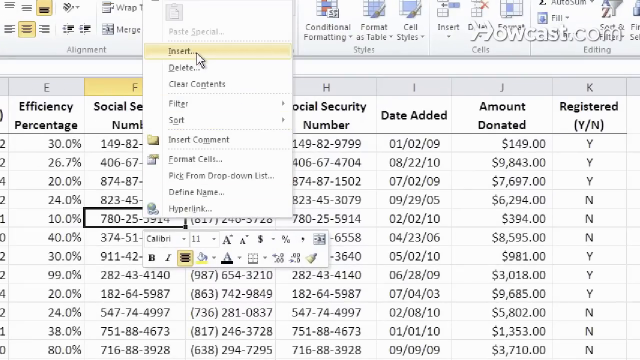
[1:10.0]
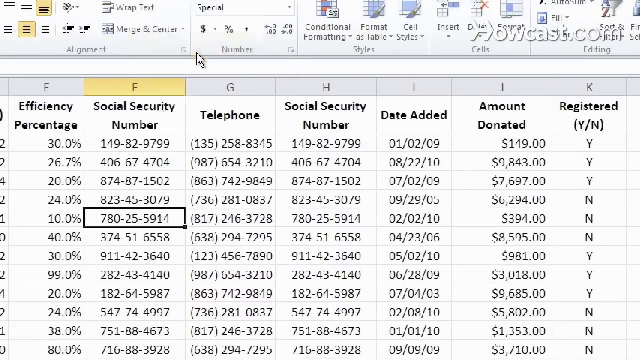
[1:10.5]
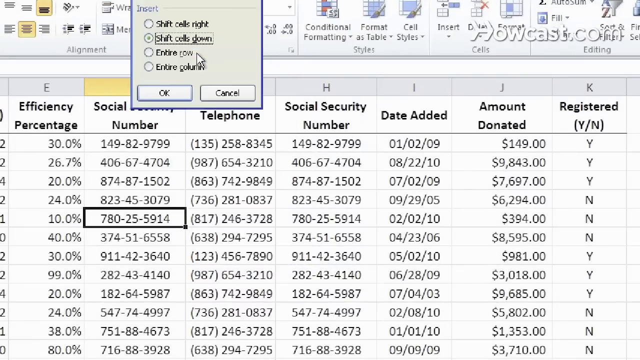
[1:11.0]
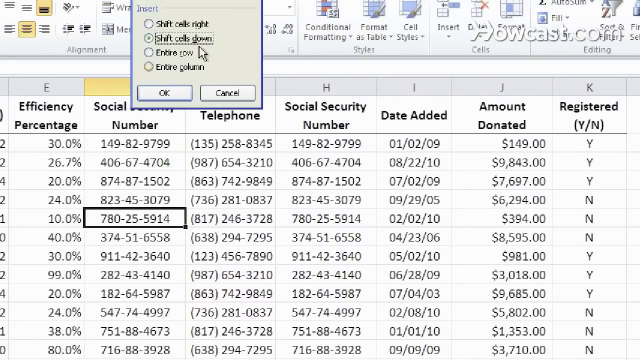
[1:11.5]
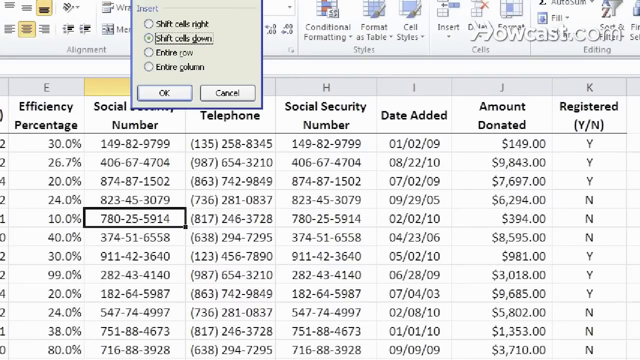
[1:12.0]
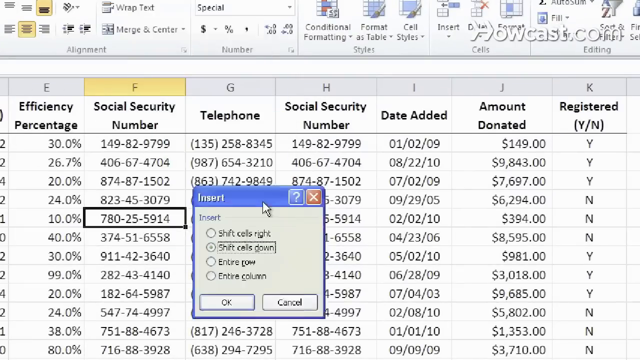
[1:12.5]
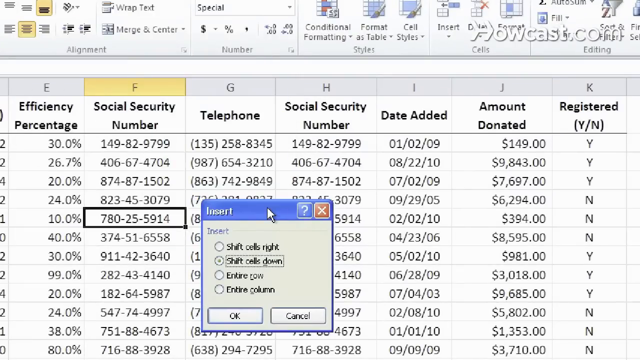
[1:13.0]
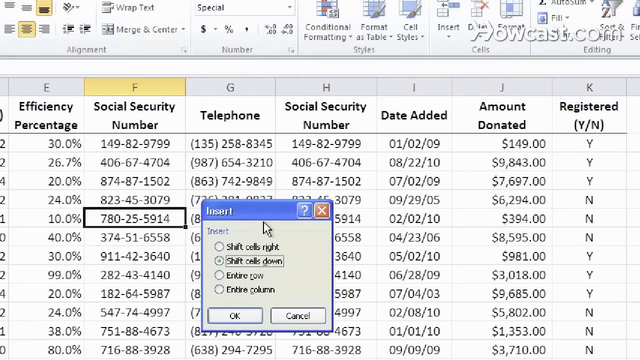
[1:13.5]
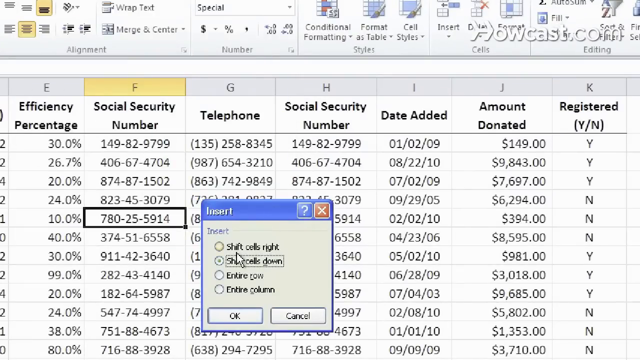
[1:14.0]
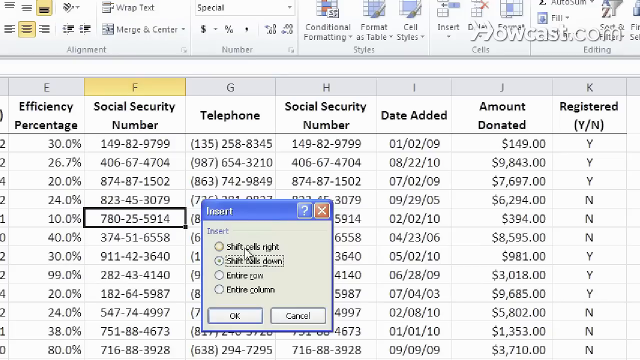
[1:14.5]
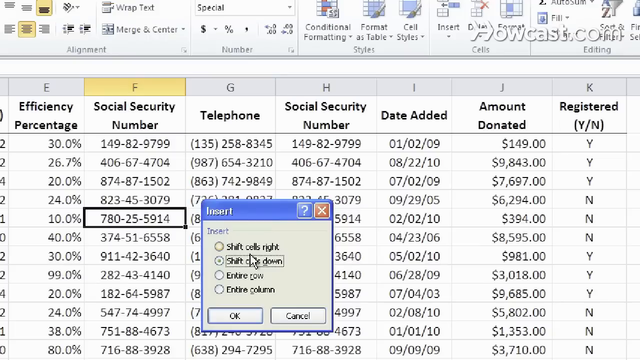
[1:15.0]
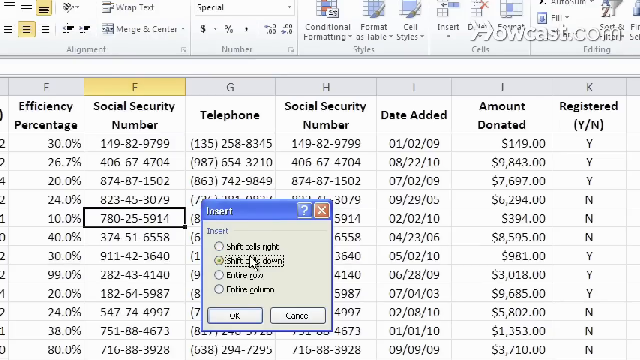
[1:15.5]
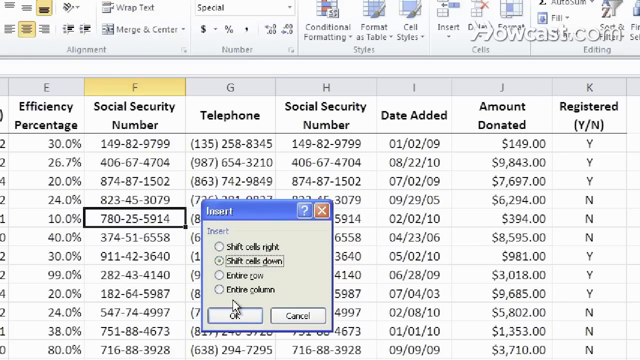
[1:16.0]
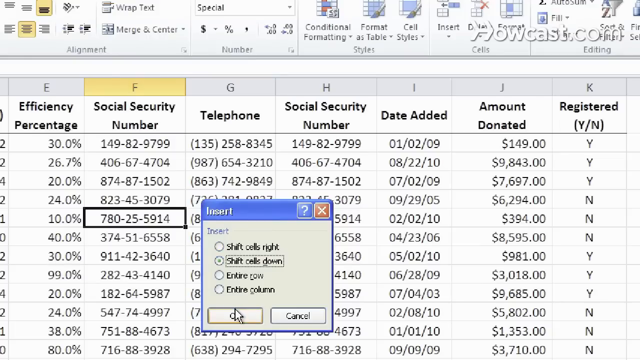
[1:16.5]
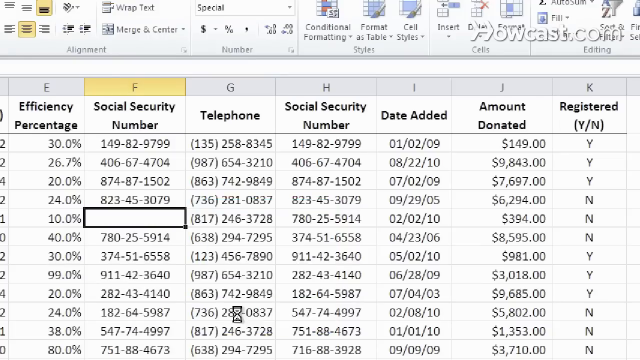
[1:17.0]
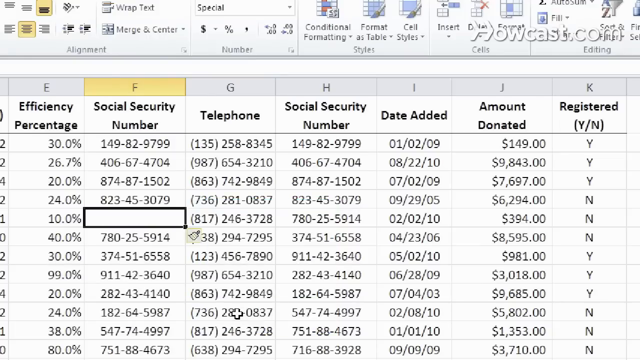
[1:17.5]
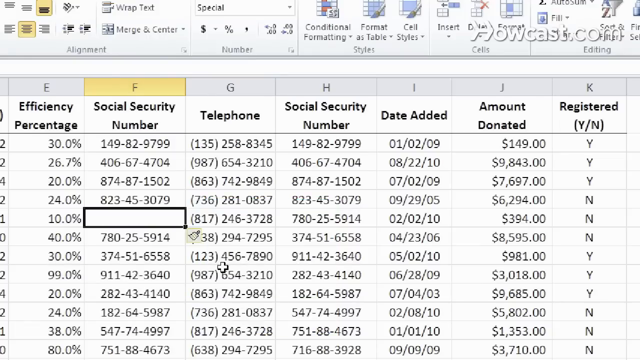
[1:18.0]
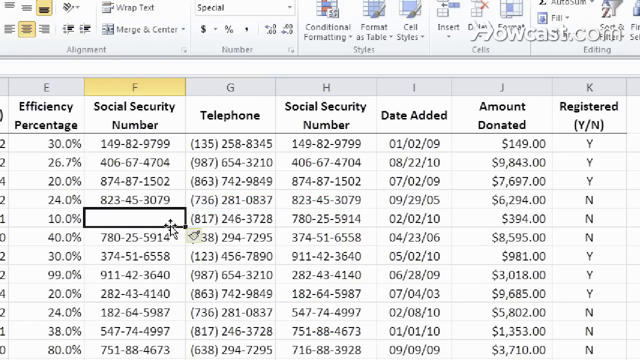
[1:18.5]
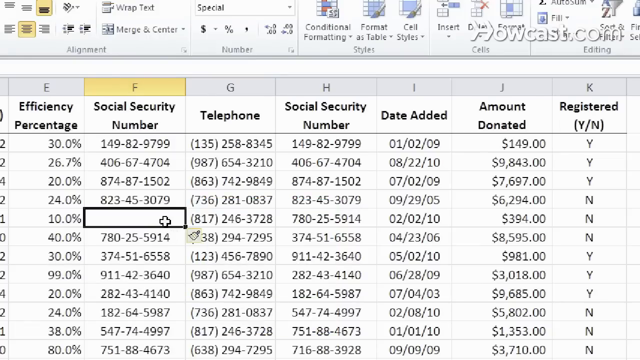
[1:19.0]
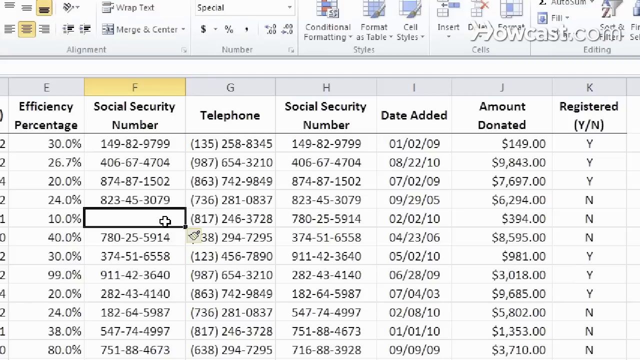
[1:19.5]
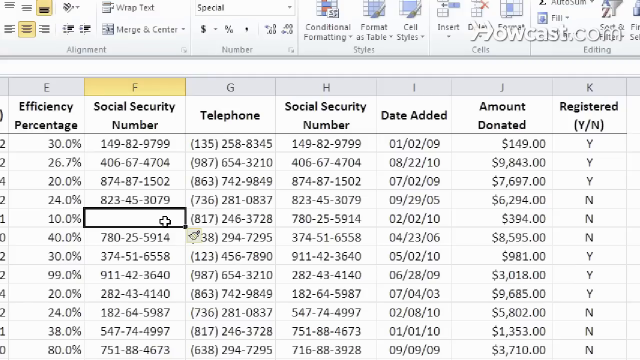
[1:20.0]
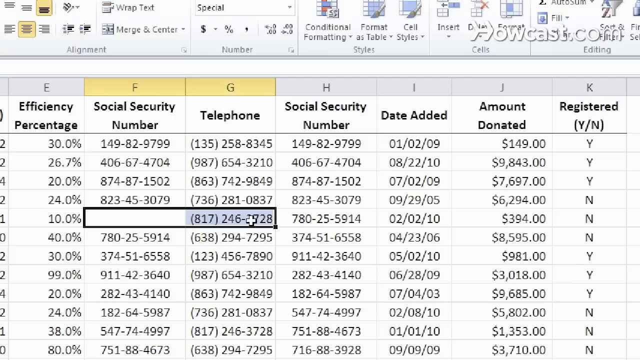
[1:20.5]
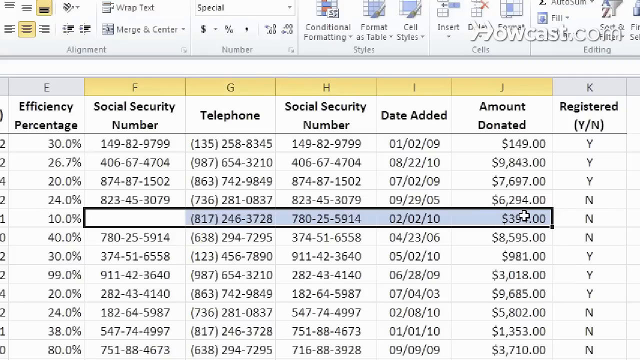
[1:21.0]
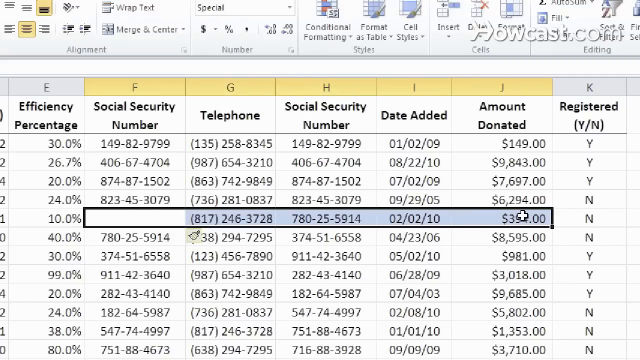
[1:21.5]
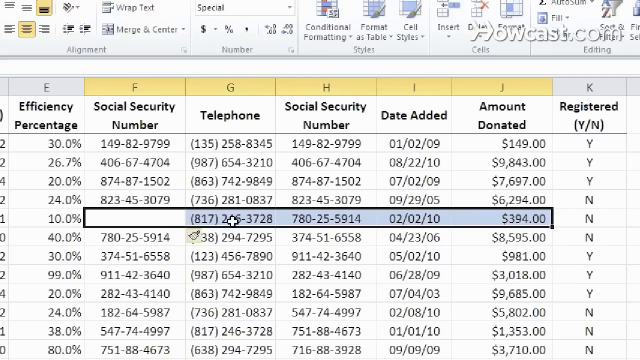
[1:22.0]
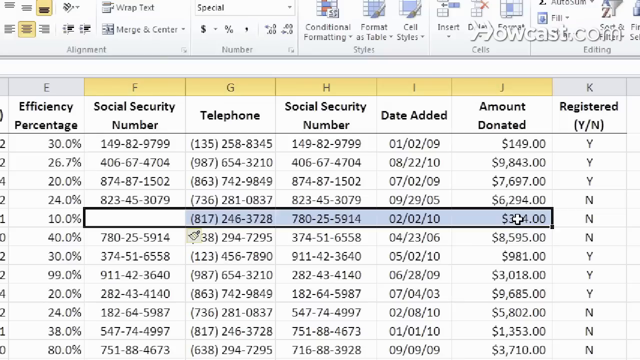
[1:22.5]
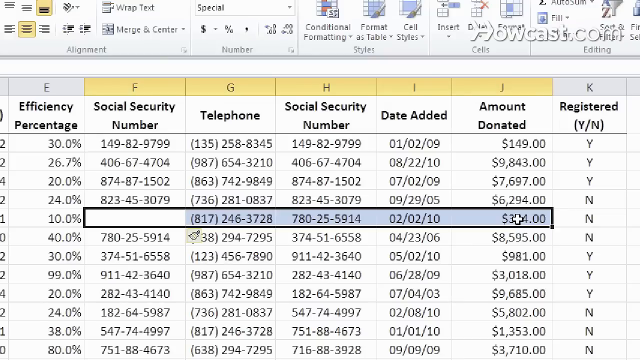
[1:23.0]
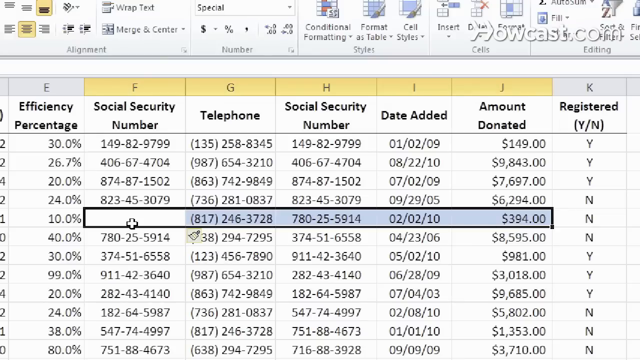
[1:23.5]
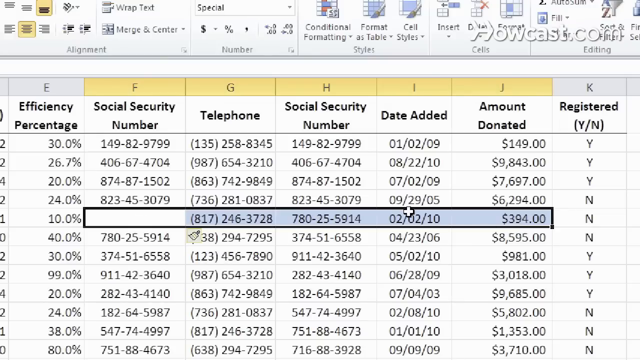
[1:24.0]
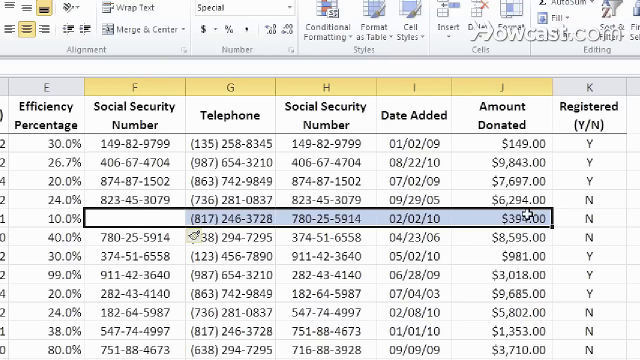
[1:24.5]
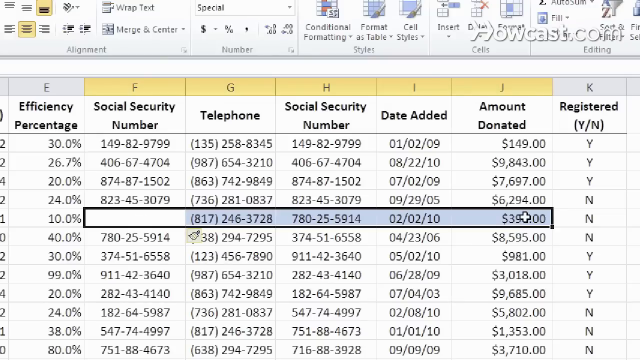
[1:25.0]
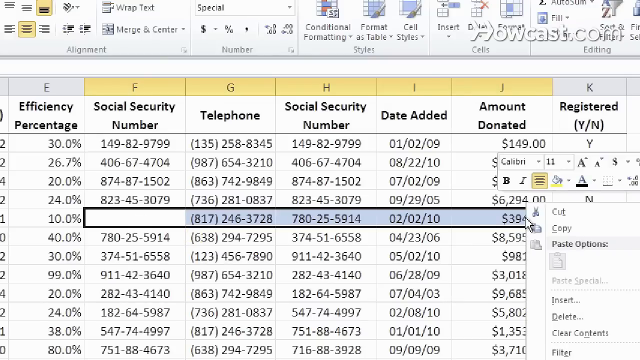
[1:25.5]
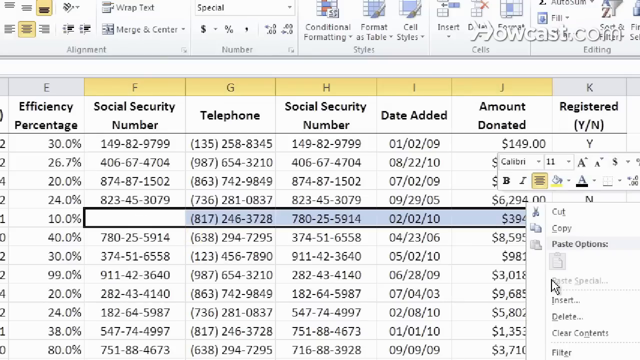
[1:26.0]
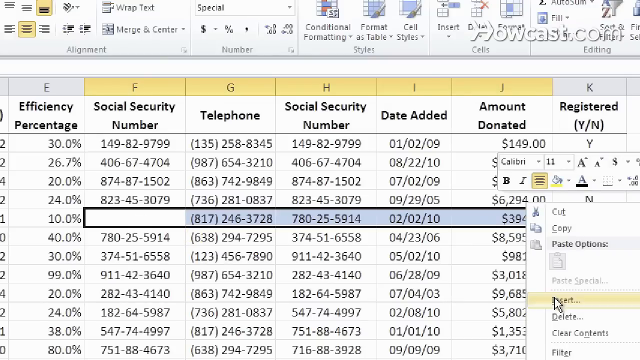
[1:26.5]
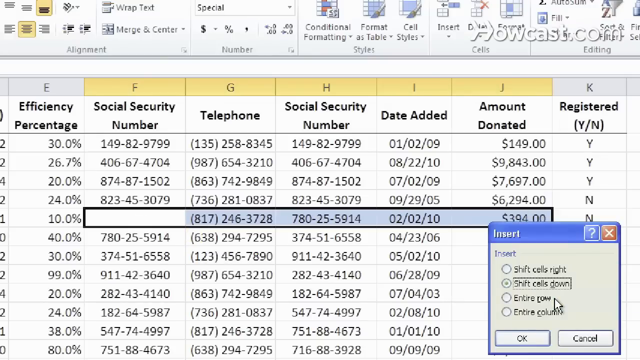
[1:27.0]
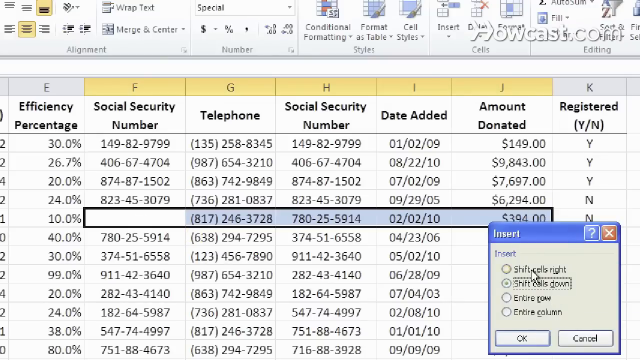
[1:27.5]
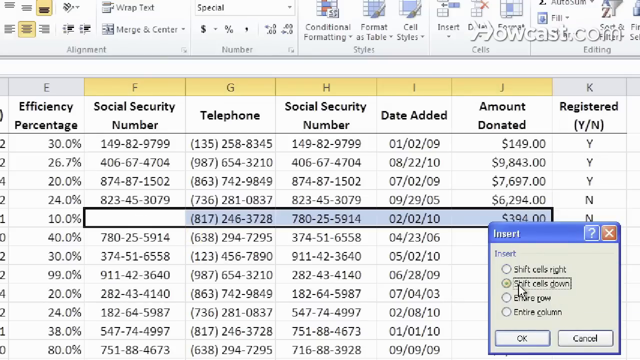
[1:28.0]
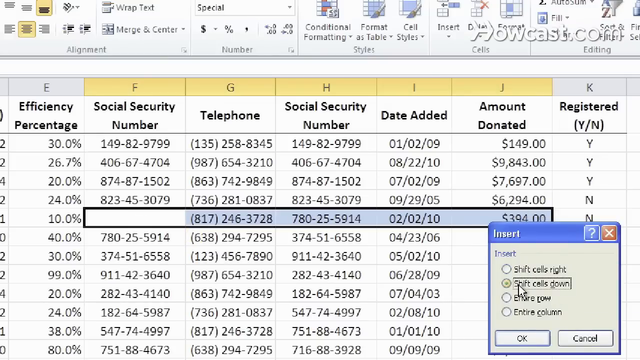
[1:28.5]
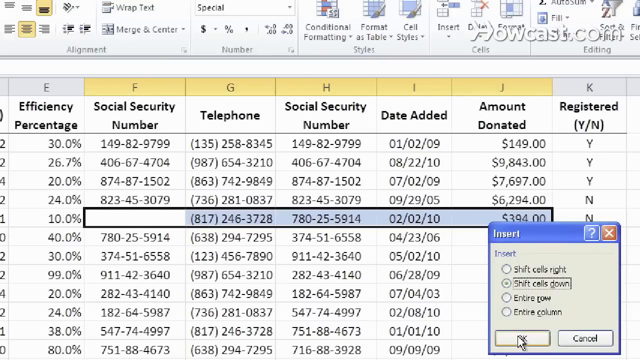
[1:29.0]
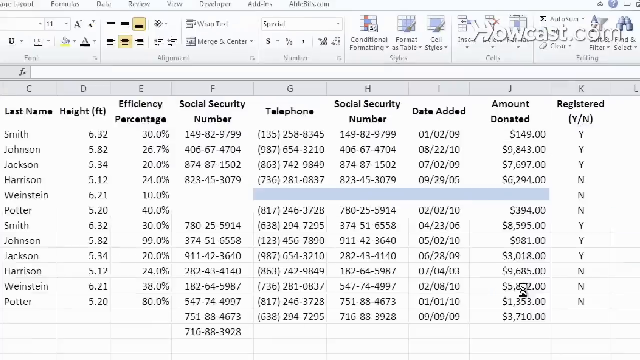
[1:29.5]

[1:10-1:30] The man seems to be choosing whether to insert a cell up, down, left or right, and hovers over the option to insert a cell up. He highlights cells on the right side of the sheet. He seems to shift the cells down, and does this for four columns next to it: telephone number, social security number, date added and amount donated, which look like they are shifted down one cell. He seems to want to move the other side down one cell as well.